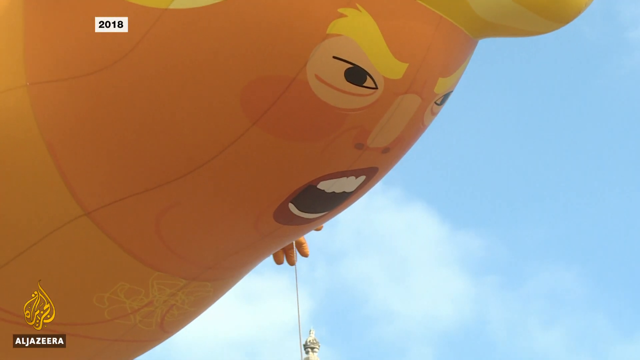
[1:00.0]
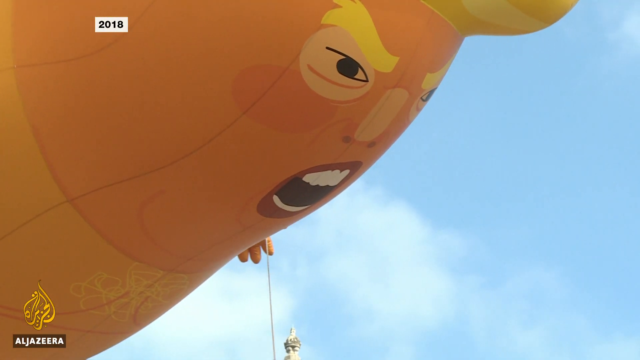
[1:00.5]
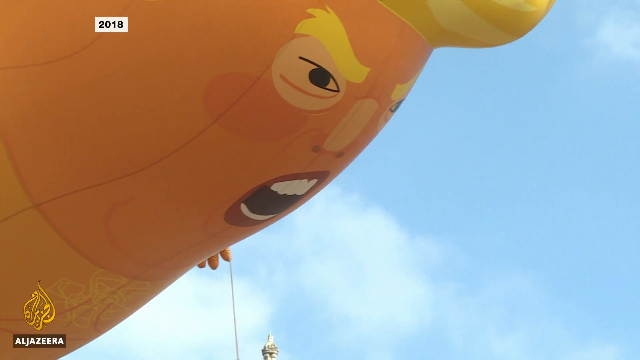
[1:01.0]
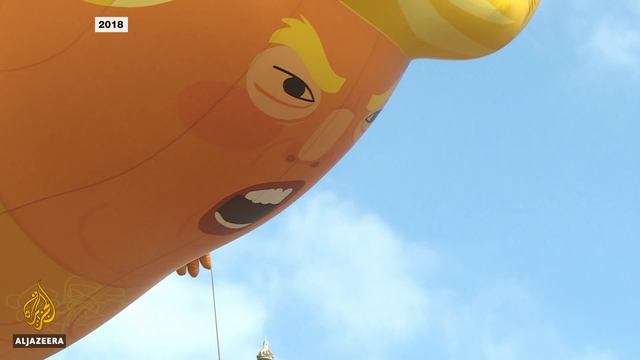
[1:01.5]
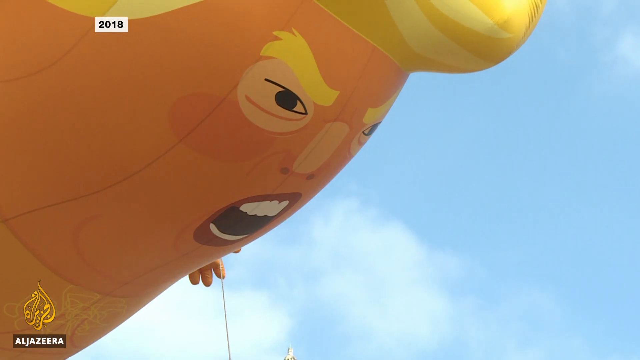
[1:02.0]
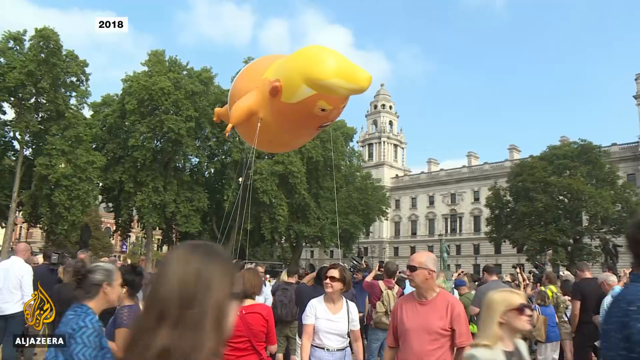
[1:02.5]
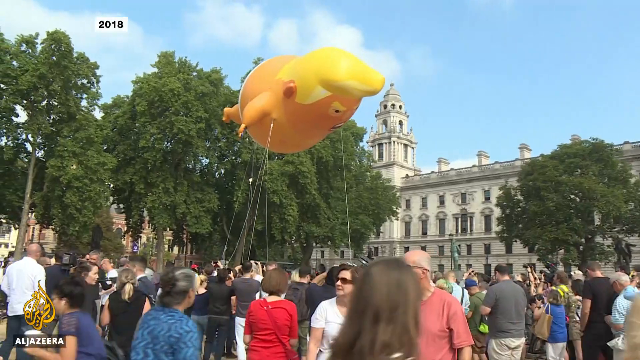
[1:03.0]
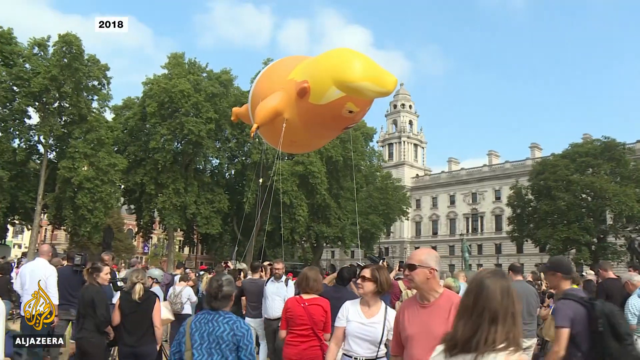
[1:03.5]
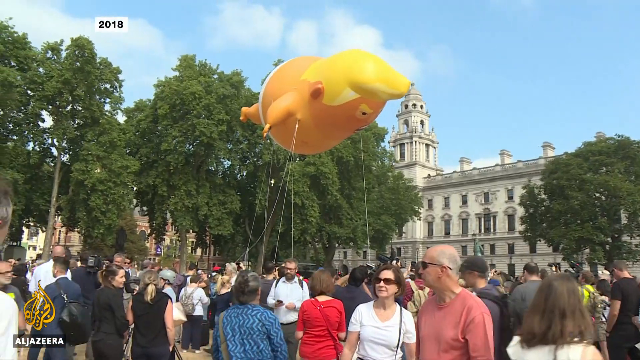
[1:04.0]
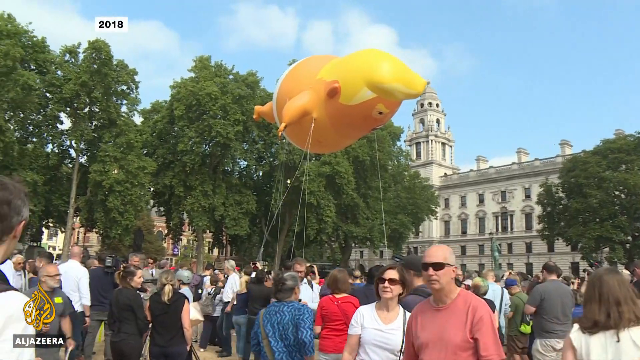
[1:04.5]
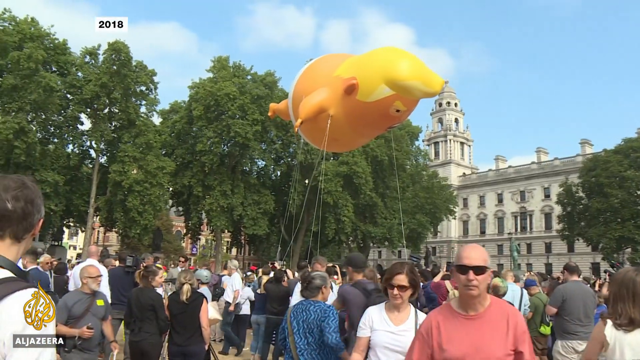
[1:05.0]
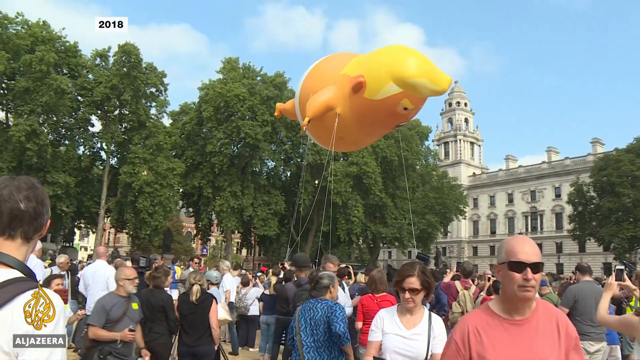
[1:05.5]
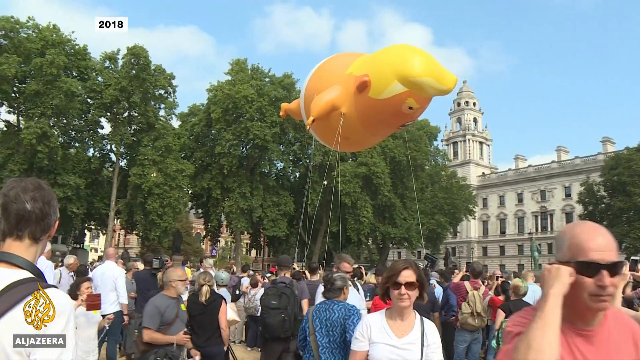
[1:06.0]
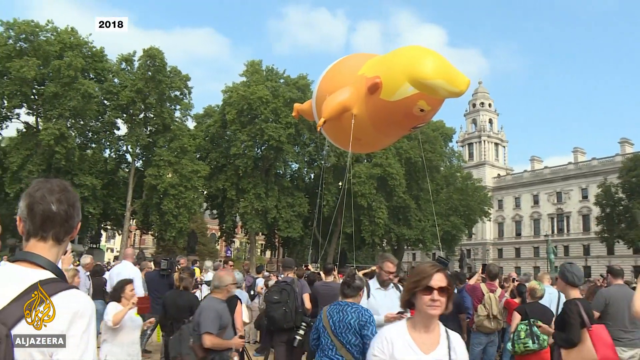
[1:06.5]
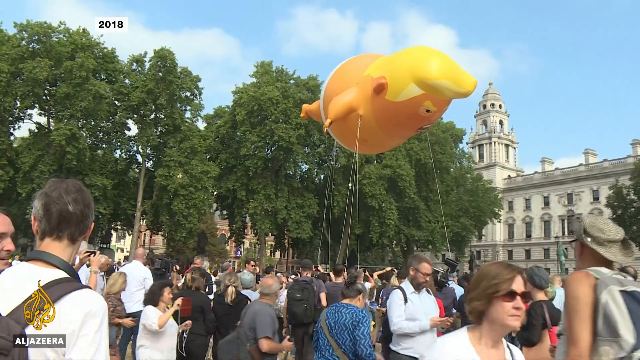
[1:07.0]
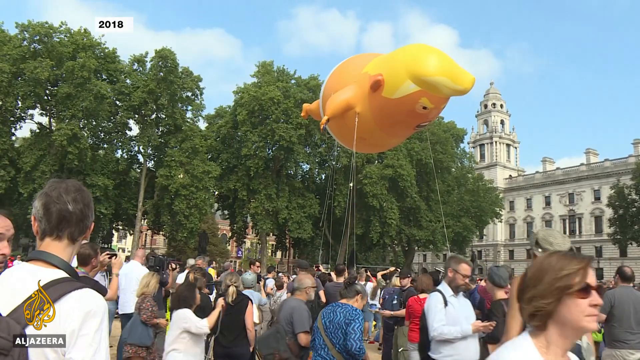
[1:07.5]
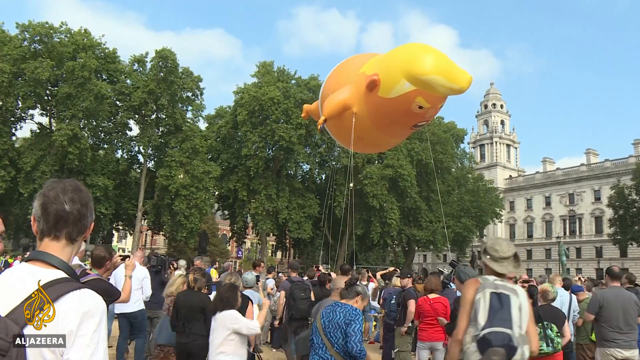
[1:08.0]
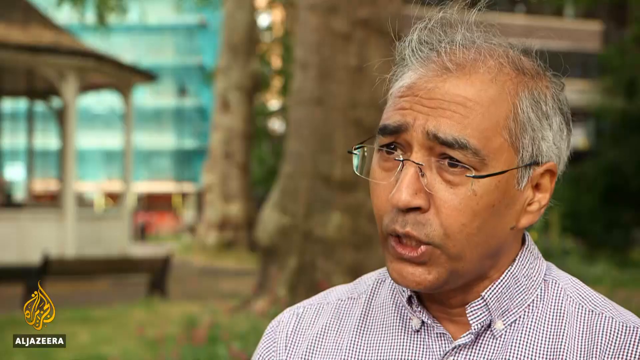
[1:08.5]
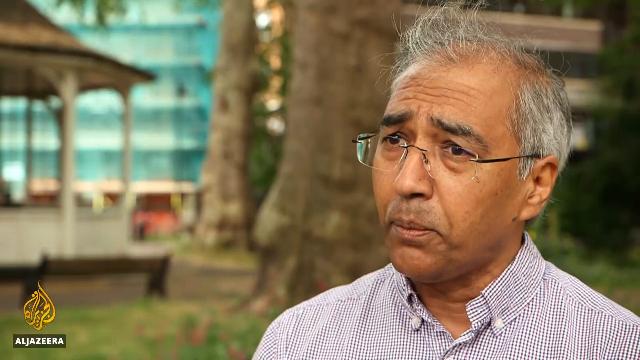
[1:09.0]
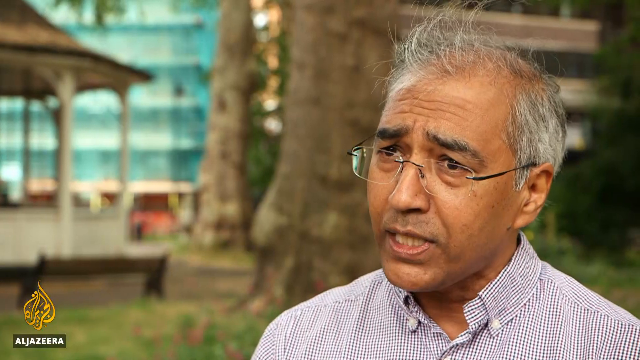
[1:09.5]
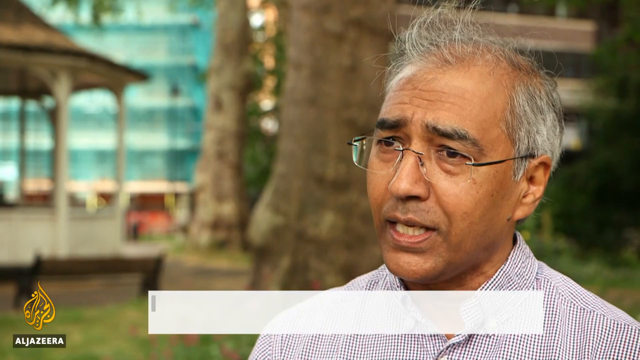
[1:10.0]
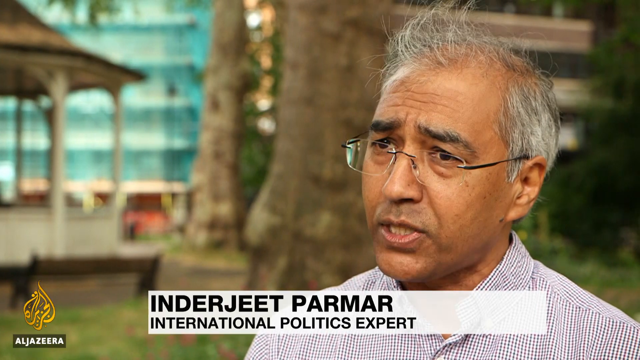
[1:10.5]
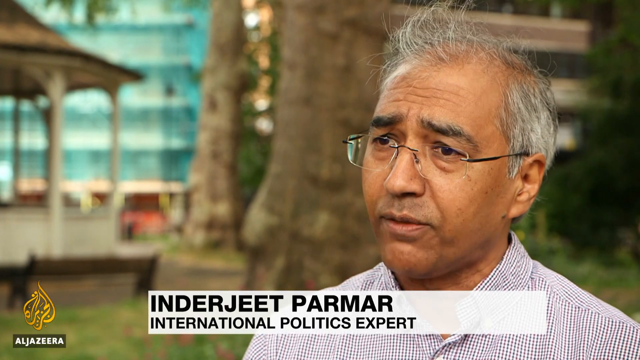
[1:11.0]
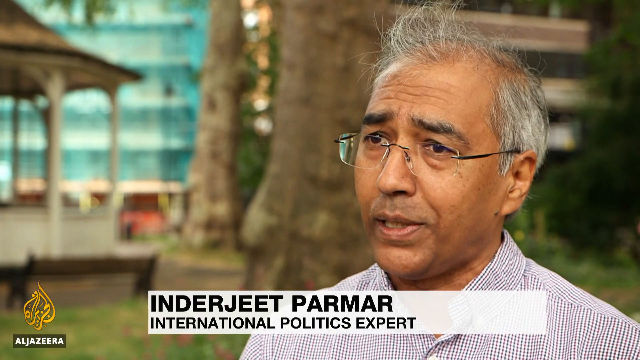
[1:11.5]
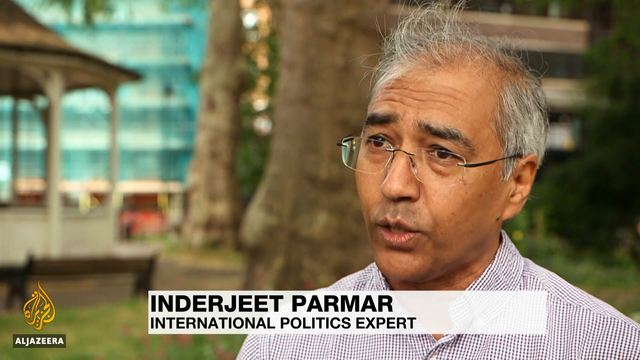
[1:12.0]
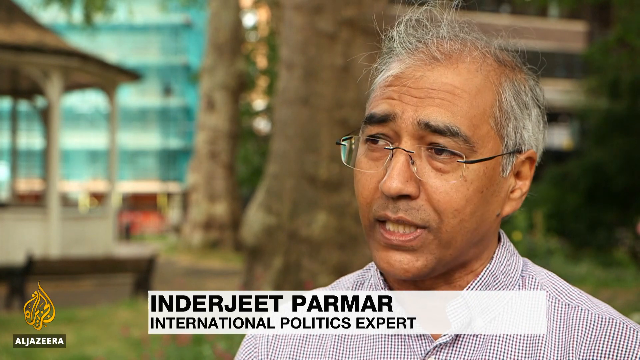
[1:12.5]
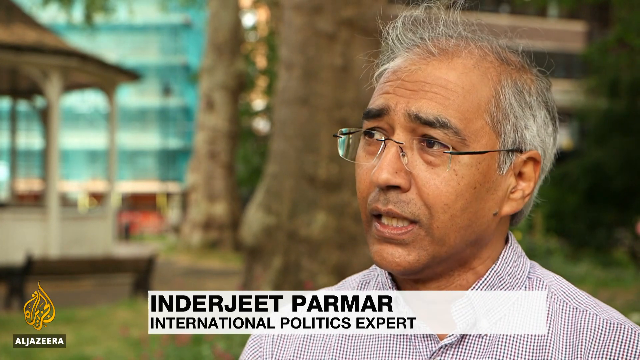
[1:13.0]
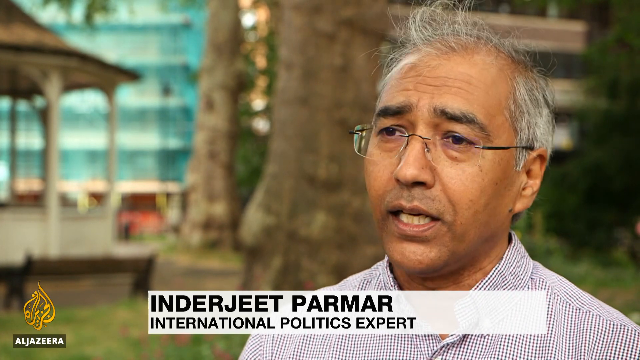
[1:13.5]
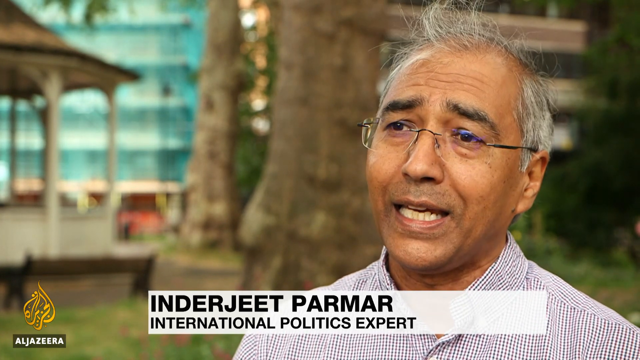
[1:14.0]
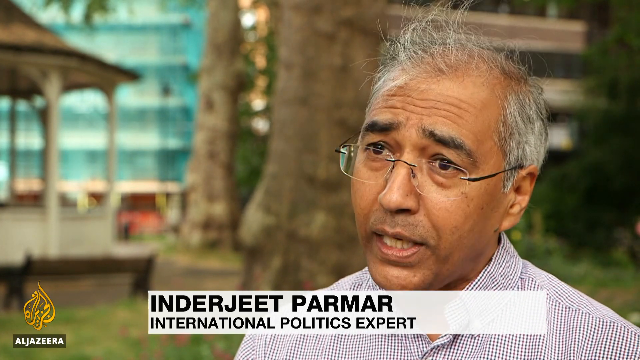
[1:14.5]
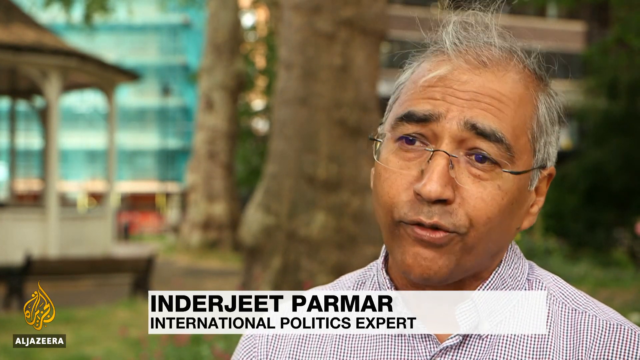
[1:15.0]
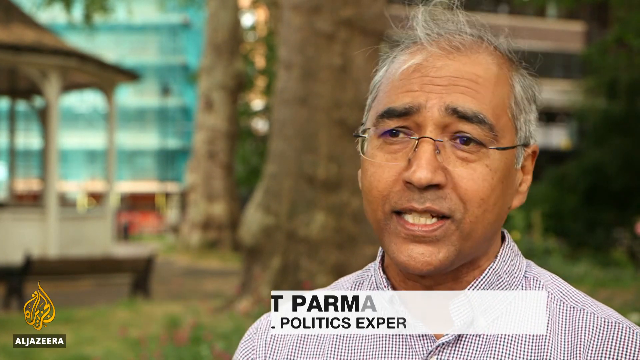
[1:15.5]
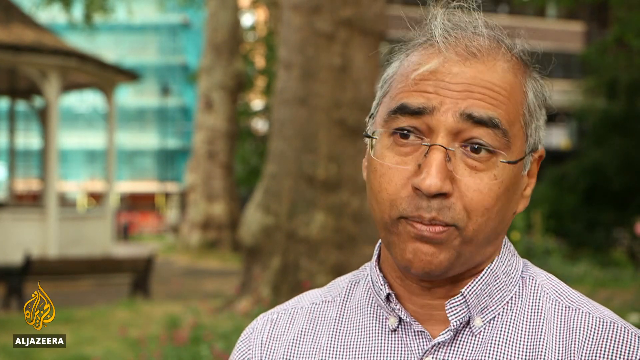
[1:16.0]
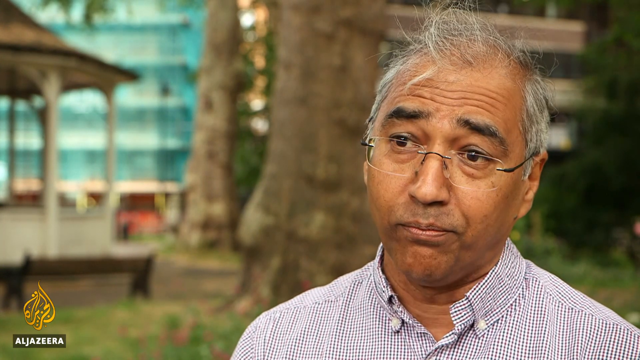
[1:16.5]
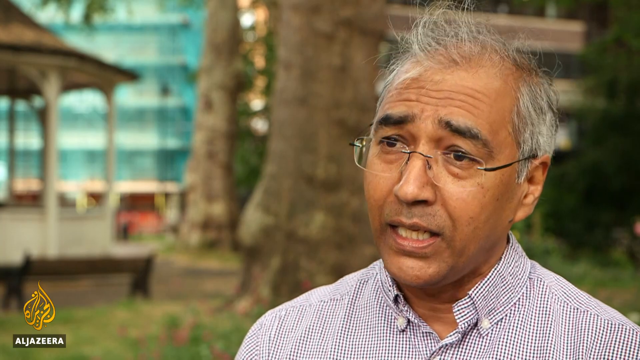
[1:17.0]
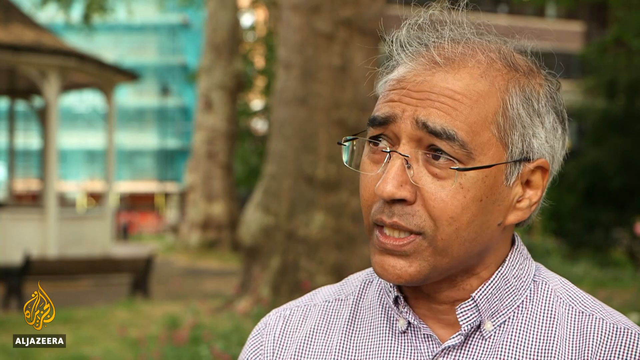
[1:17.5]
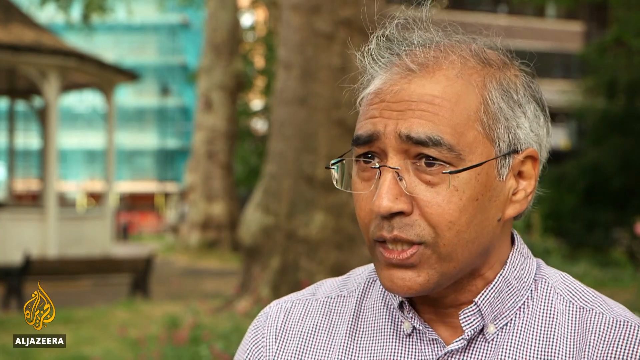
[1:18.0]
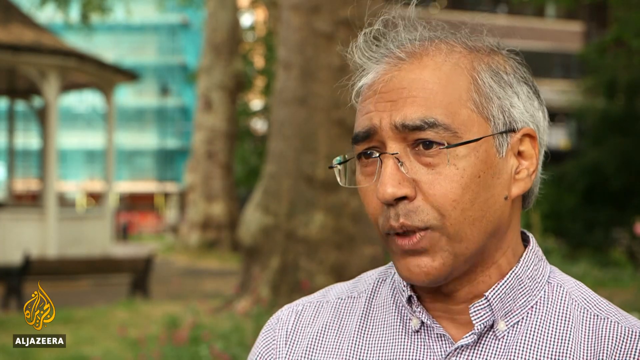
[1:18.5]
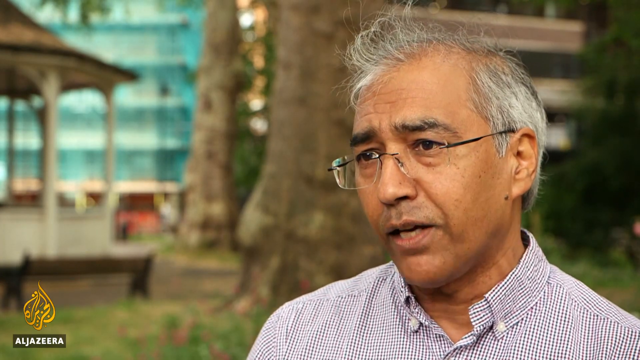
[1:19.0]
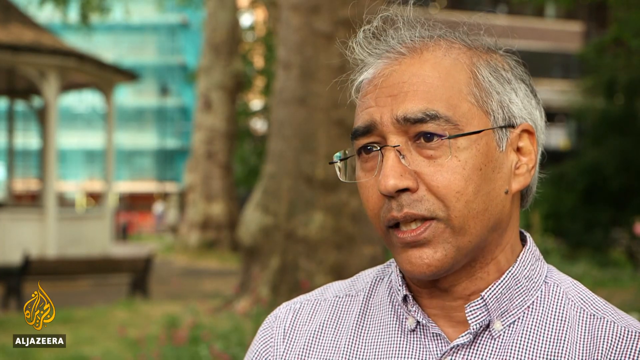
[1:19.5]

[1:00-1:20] A cartoonish balloon takes up most of the screen, splitting it diagonally from the top right to the bottom left, against a mostly blue sky with some white clouds. The balloon floats around, then the camera zooms out to show it floating, held by people all around it, with another crowd of people in the background, green trees and a building. "2018" appears in the top left corner. Then an older man, apparently Indian, is talking; he wears a purple shirt and clear glasses and is sort of facing the left side of the screen, his chest visible. A name appears below him: "Inderjeet Parmar", and below that "international politics expert". He looks serious while talking, sort of looks toward the left and back, sways his head left and right, and shrugs his shoulders slightly.